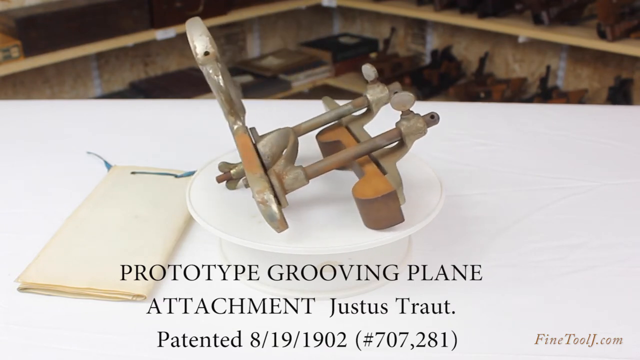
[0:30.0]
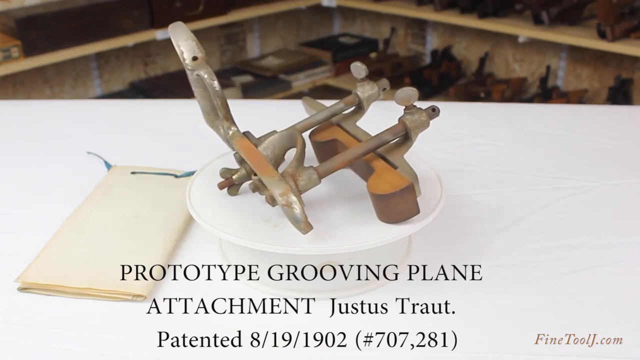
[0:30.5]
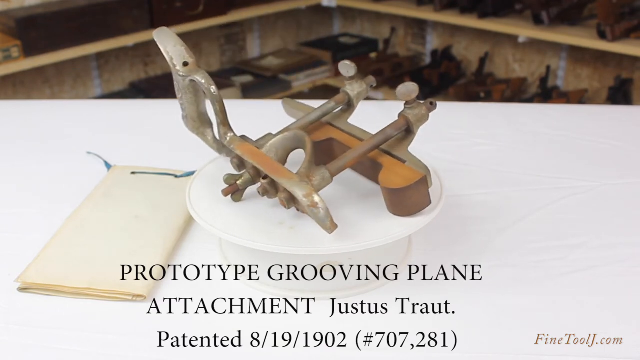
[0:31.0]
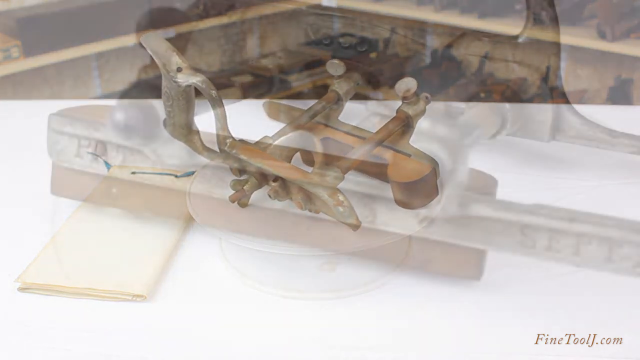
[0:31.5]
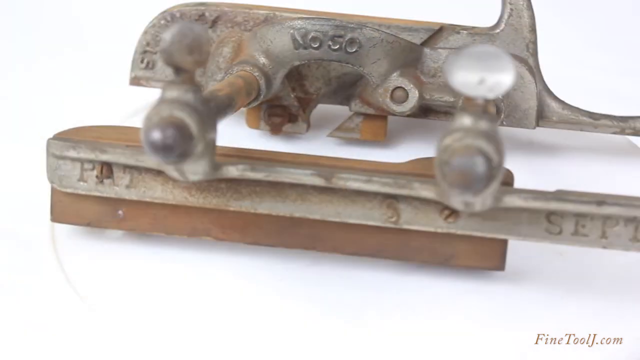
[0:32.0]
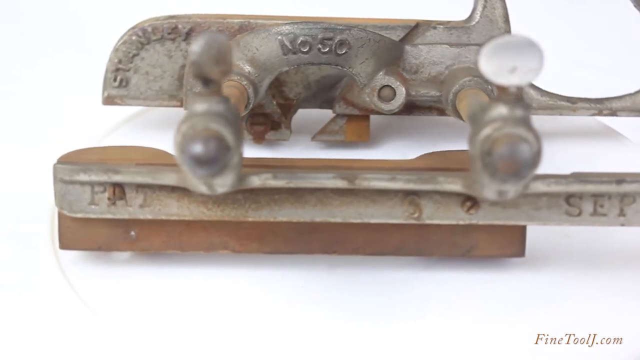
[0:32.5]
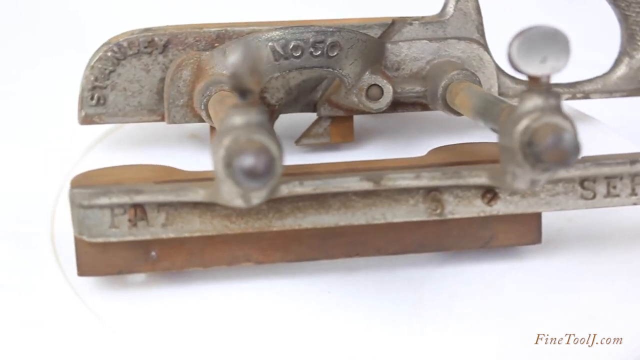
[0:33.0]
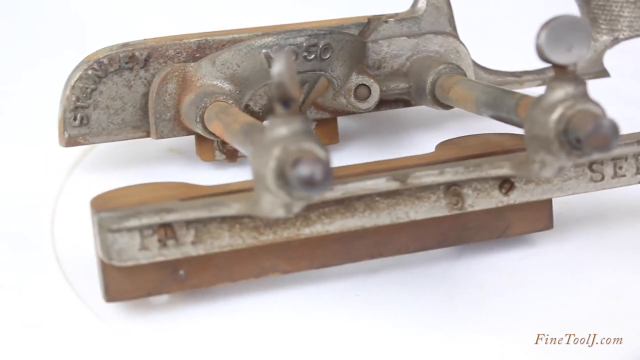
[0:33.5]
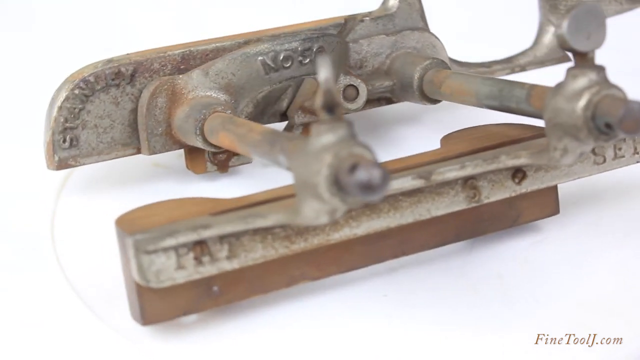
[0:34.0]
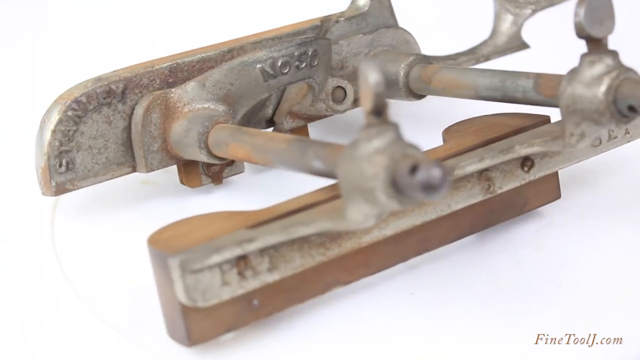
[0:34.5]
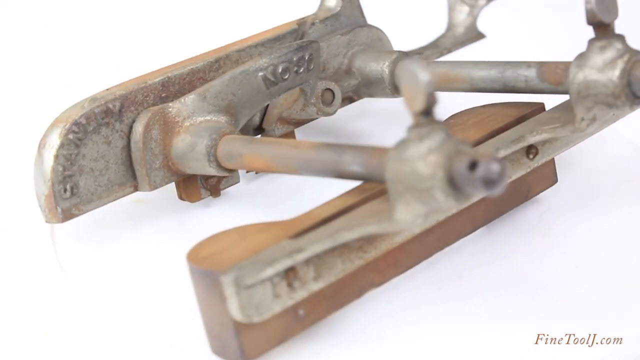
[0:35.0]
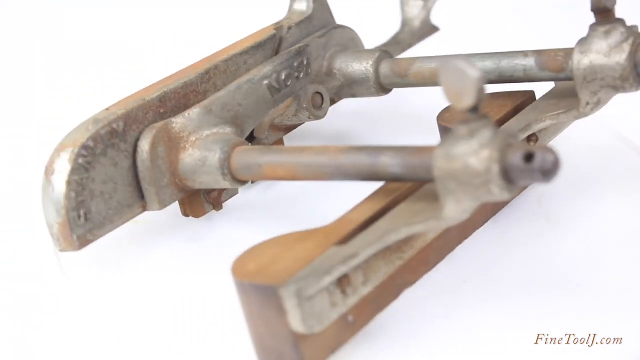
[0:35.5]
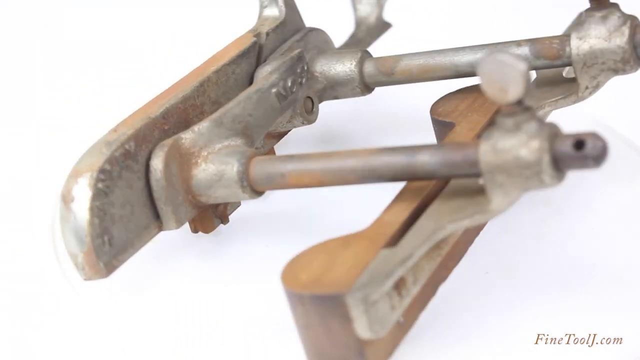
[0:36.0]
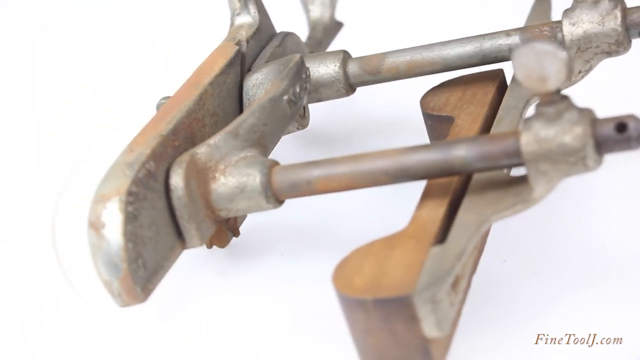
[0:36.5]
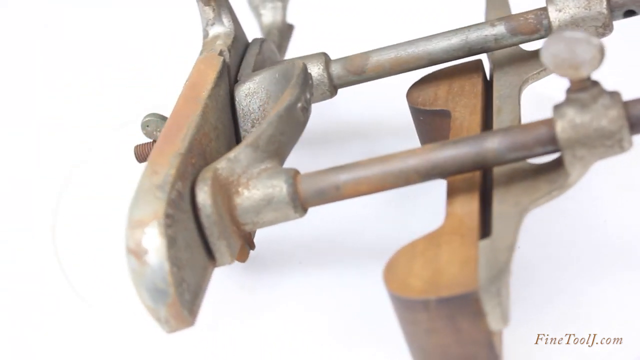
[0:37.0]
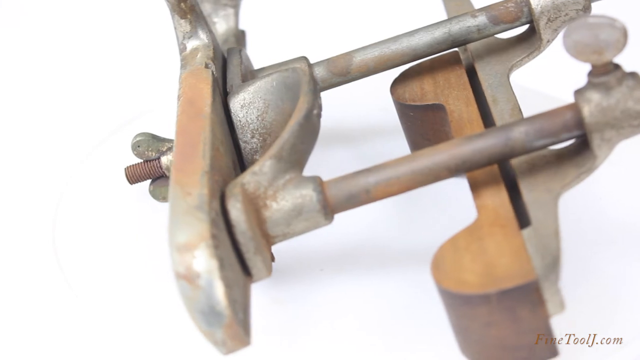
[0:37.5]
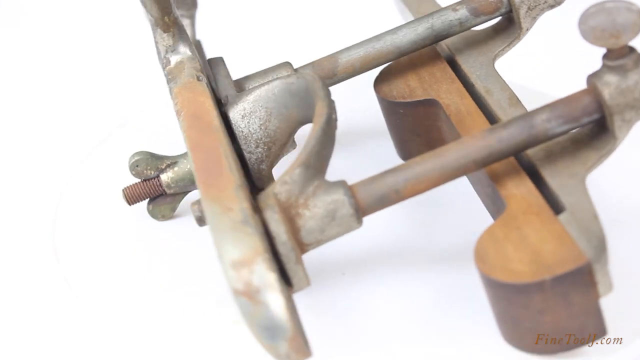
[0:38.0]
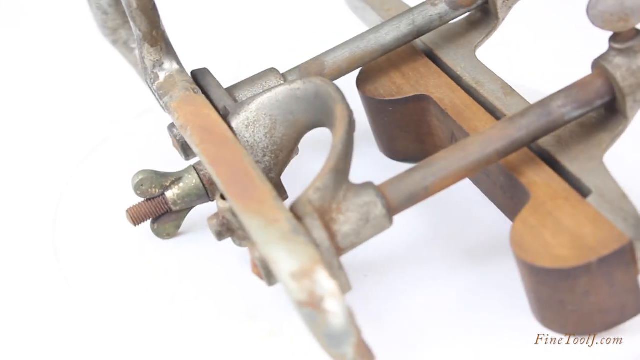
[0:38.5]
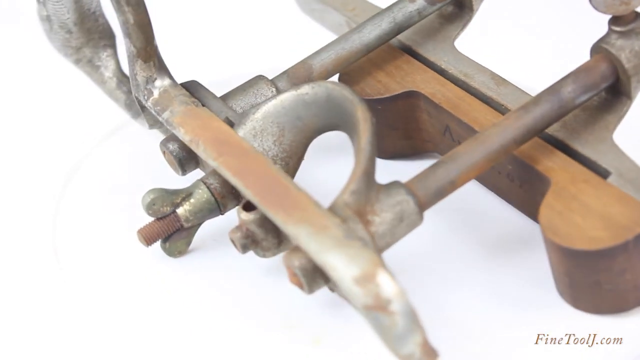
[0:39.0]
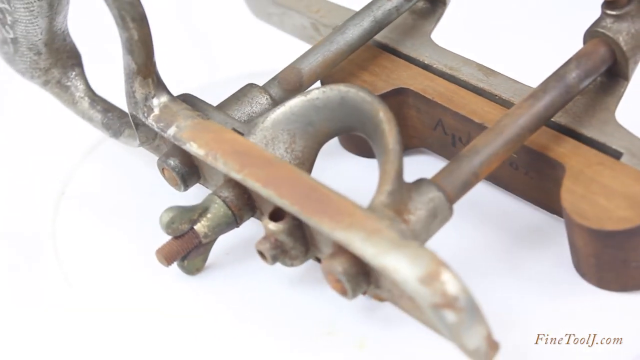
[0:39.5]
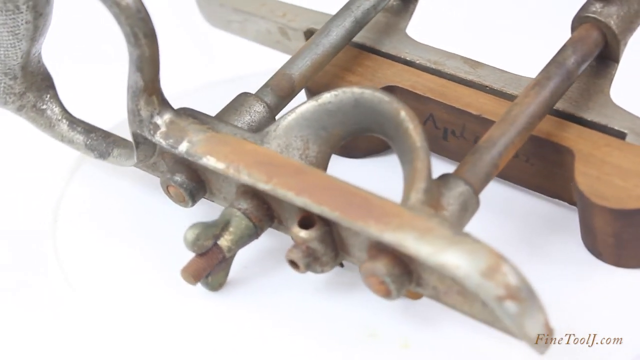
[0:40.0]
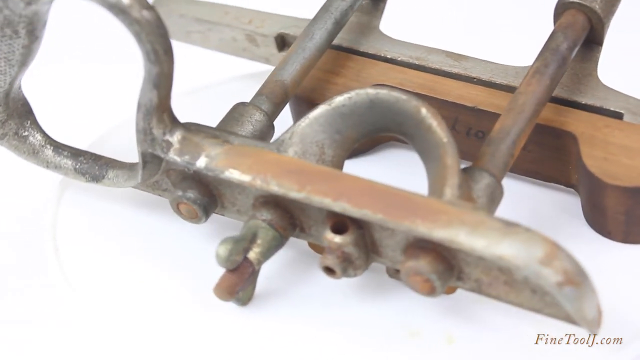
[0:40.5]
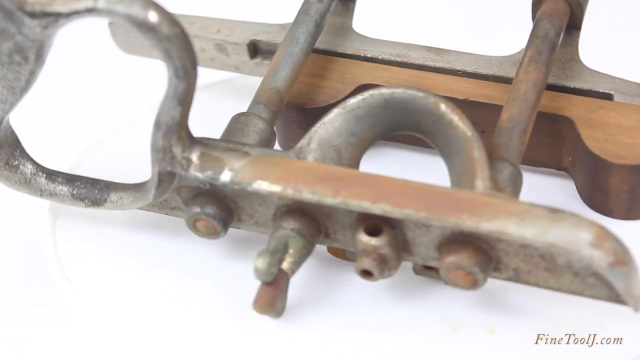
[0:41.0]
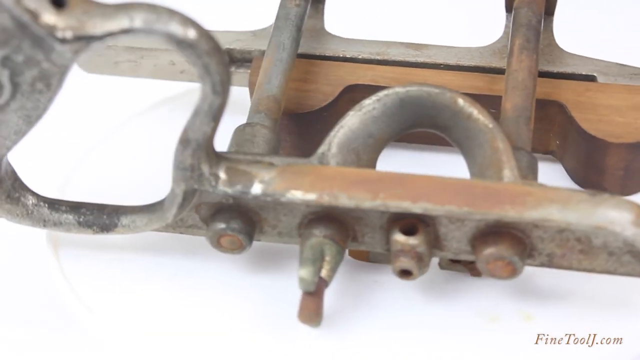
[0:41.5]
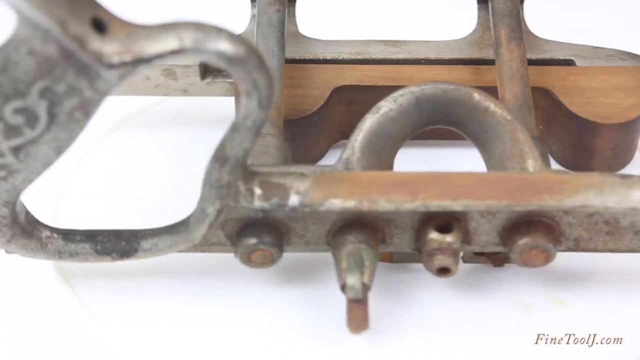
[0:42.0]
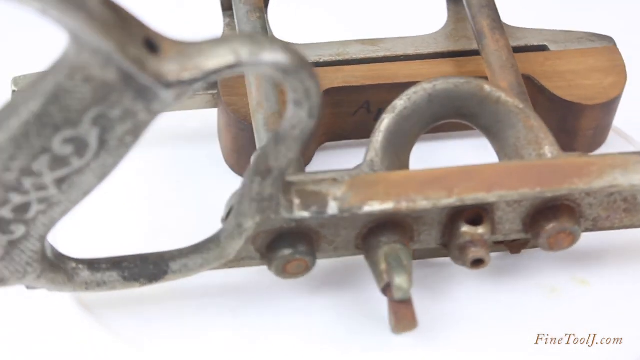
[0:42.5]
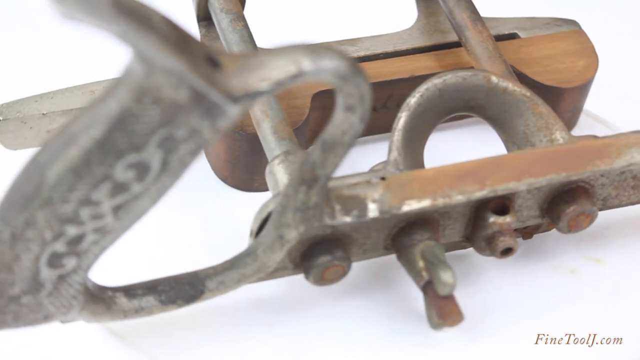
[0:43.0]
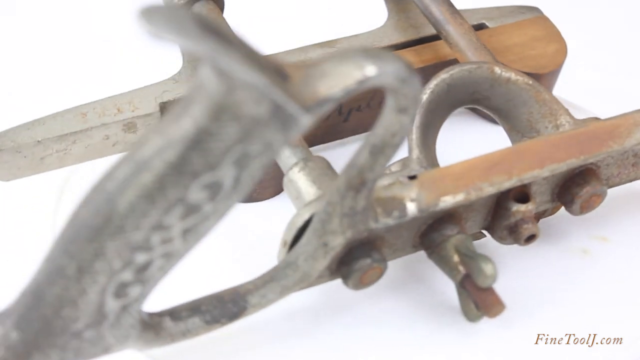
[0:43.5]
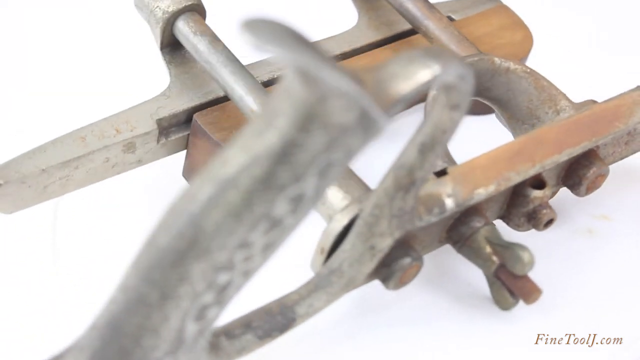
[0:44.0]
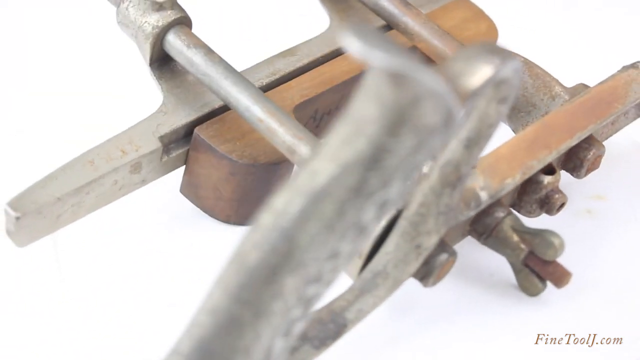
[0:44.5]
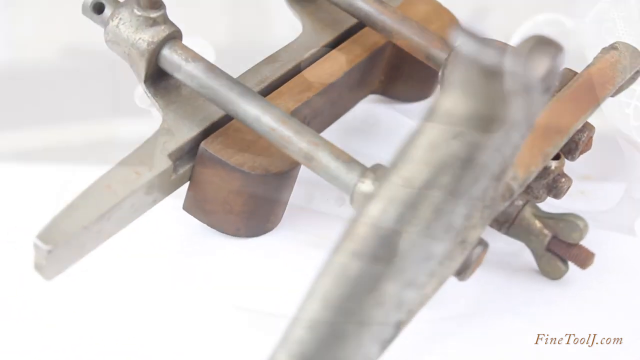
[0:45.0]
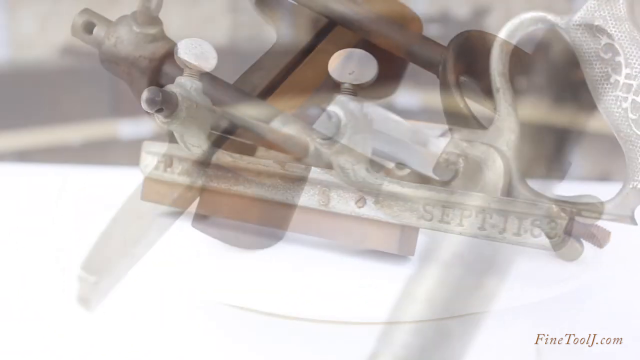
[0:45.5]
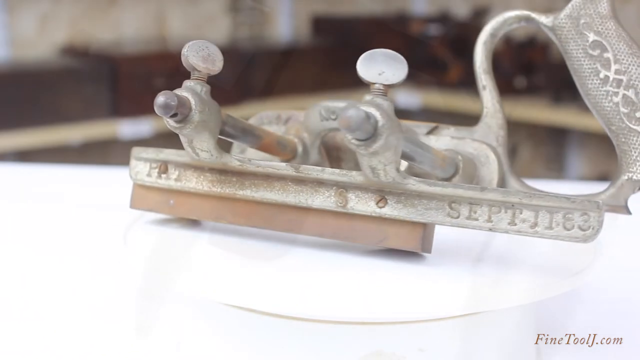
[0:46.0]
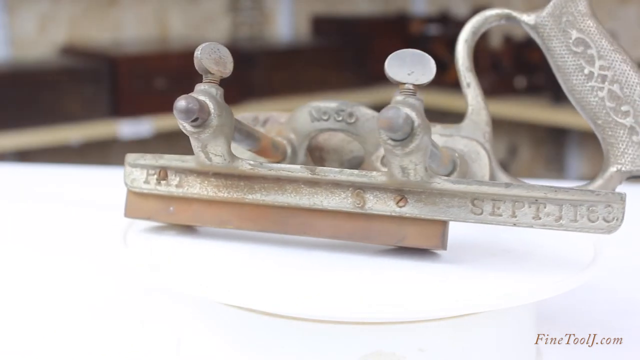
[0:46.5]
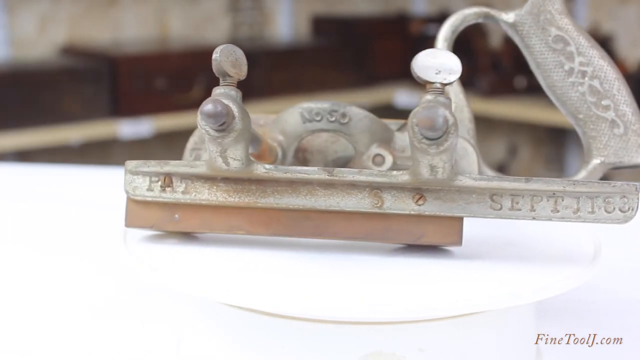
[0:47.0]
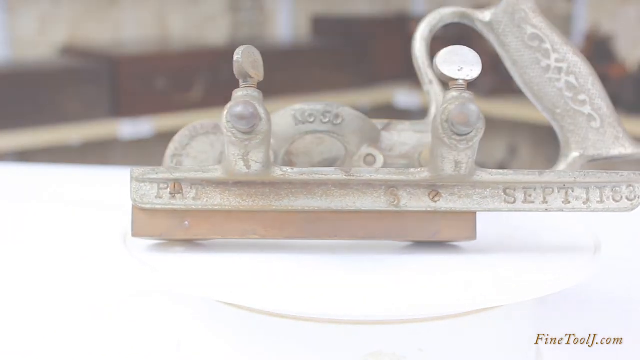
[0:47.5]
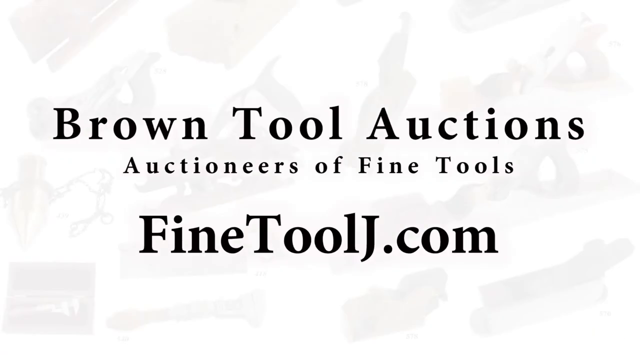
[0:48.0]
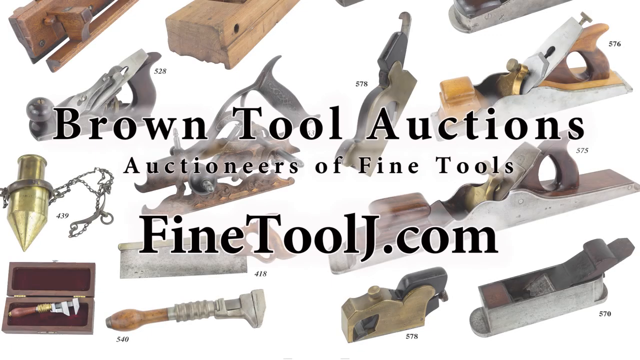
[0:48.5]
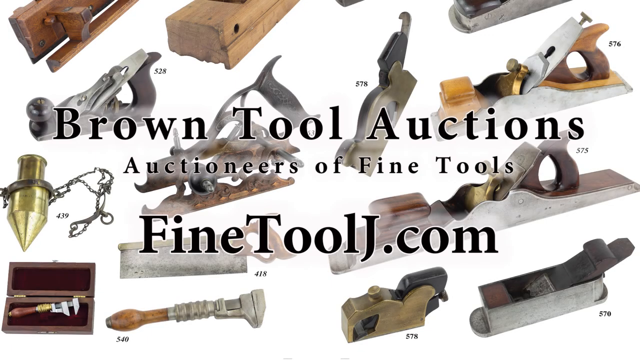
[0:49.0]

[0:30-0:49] A brown contraption spins counterclockwise on a white platform that turns in place on a white table. A pamphlet is to the left of the platform, and in the background are two sets of L-shaped shelves with several objects on them. Black text at the bottom middle reads "Prototype Grooving Plane", with "Attachment Justus Traut." beneath it, then "Patented 8/19/1902" and, in parentheses, "#707,281". Brown text in the lower right corner reads "FindToolJ.com". The contraption keeps spinning, and the video fades to a close-up of it: on a metal piece at its front, the word "Stanley" is on the left and "No 50" in the middle. It continues to spin counterclockwise in close-up. The video fades to another angle, showing the word "Pat" on the lower left part of the contraption and the letters S-E-P-T-I-T-E-3. The video then fades to white, and when it fades back in, several contraptions, 14 in all, are visible in the background. Black text in the middle reads "Brown Tool Auctions", with "auctioneers of fine tools" beneath it and "FineToolJ.com" beneath that.